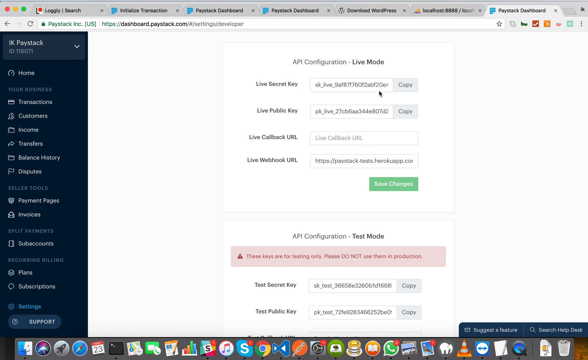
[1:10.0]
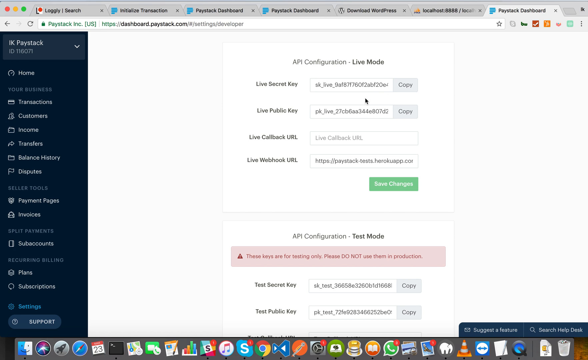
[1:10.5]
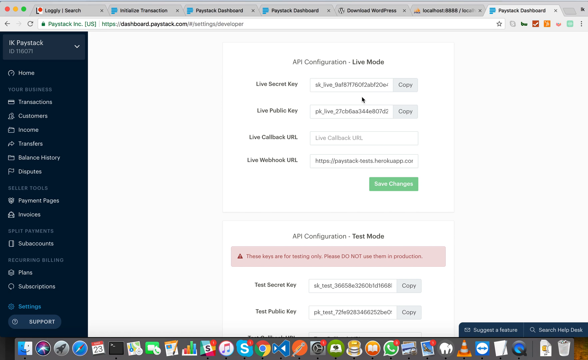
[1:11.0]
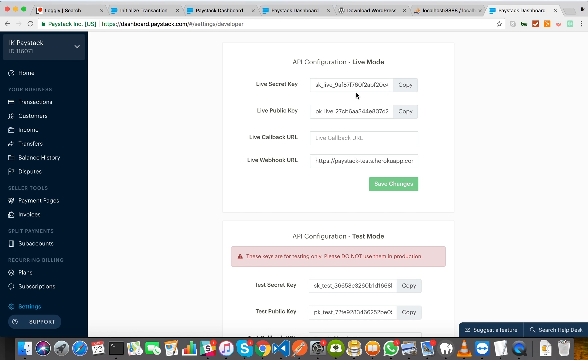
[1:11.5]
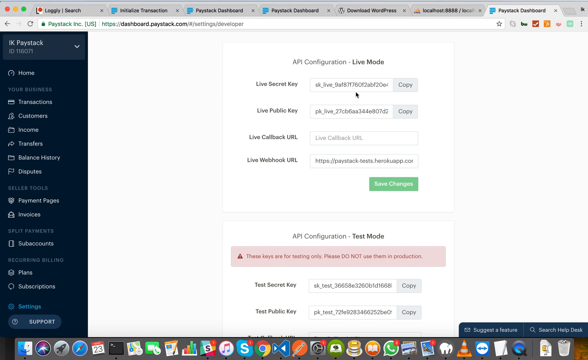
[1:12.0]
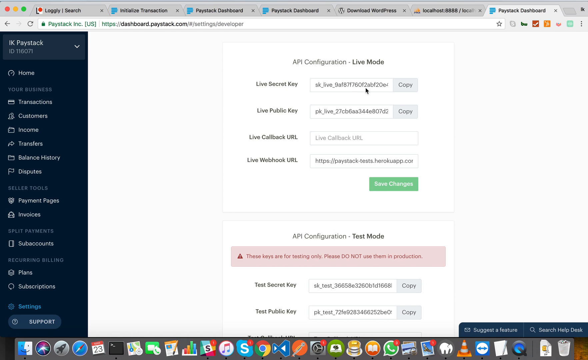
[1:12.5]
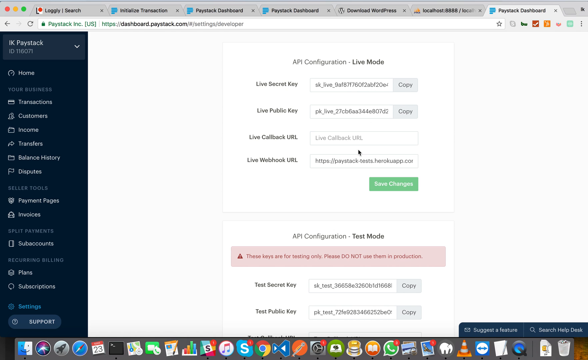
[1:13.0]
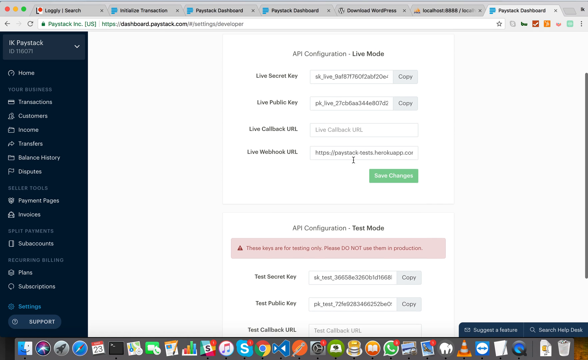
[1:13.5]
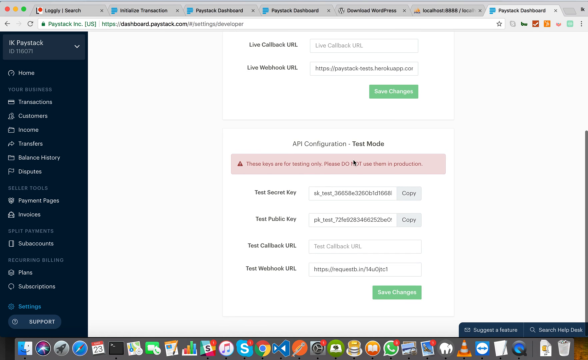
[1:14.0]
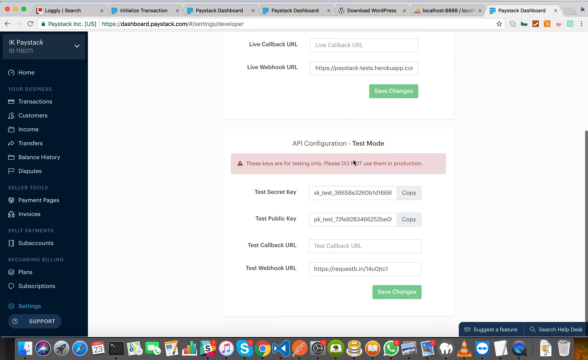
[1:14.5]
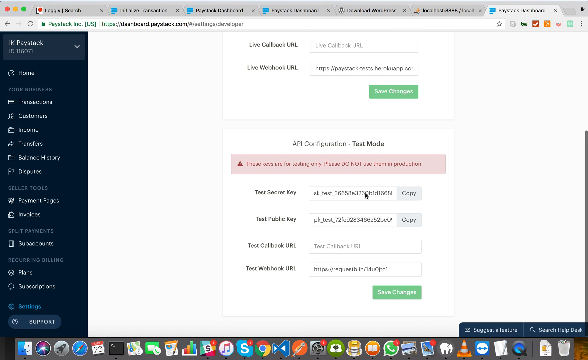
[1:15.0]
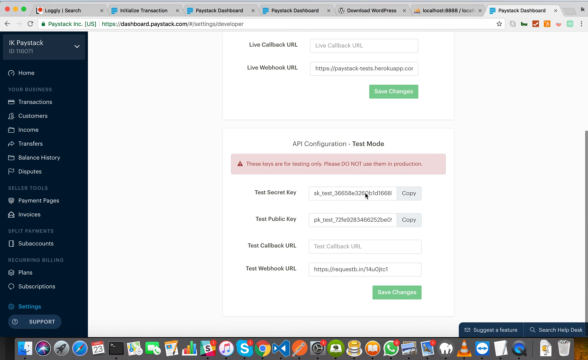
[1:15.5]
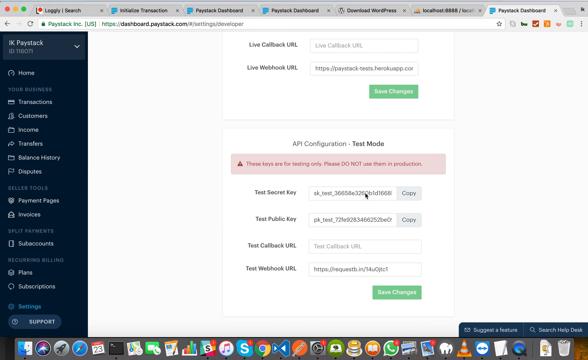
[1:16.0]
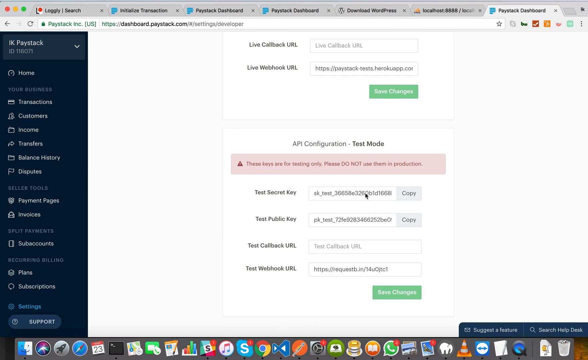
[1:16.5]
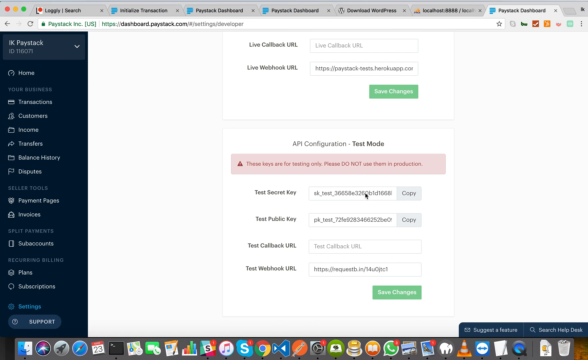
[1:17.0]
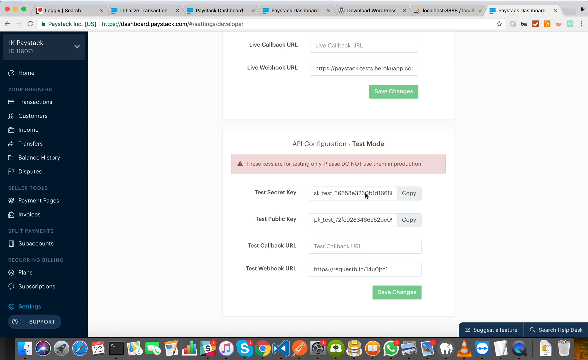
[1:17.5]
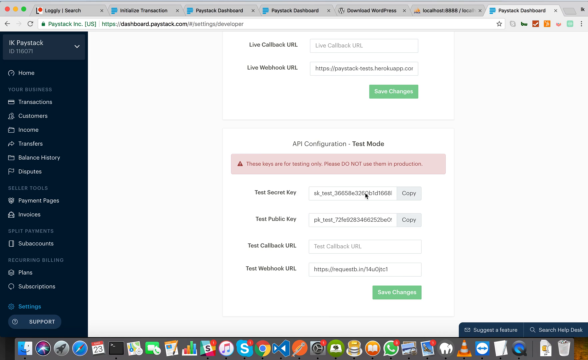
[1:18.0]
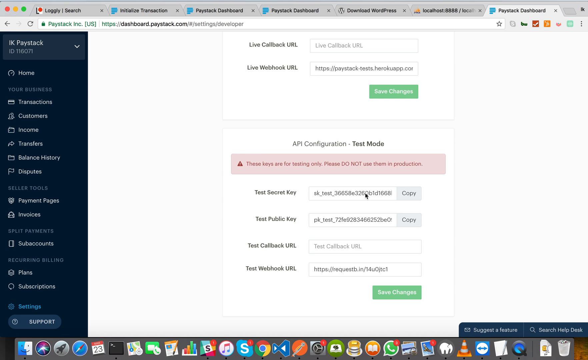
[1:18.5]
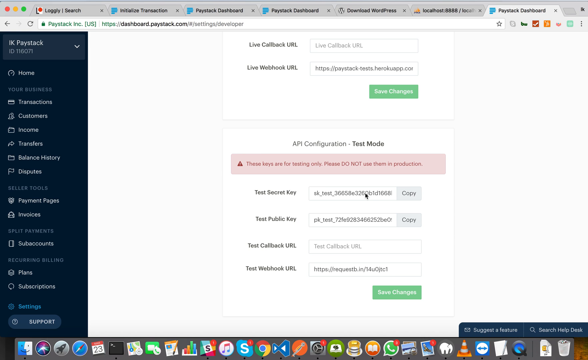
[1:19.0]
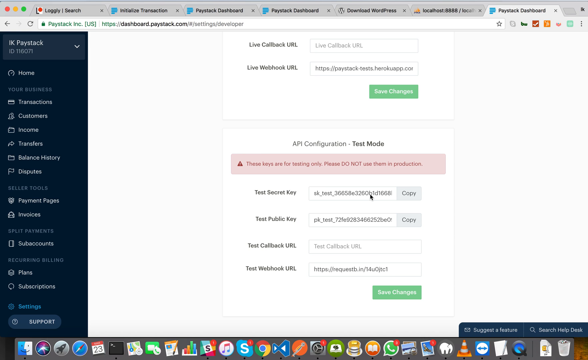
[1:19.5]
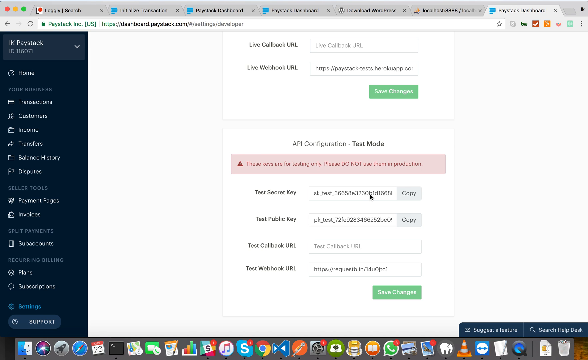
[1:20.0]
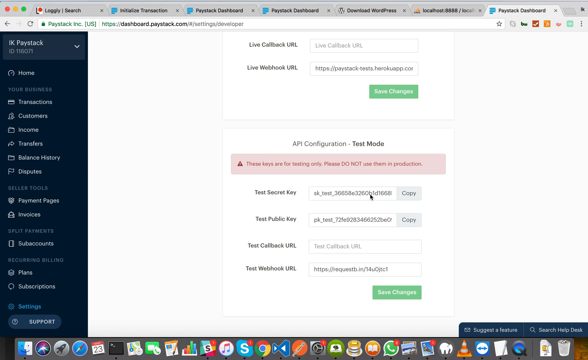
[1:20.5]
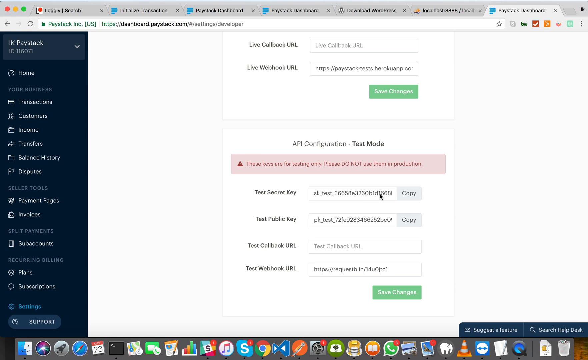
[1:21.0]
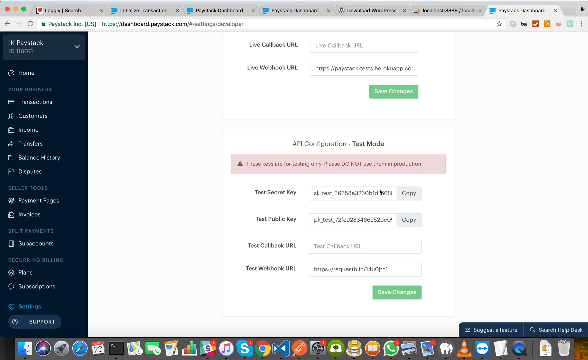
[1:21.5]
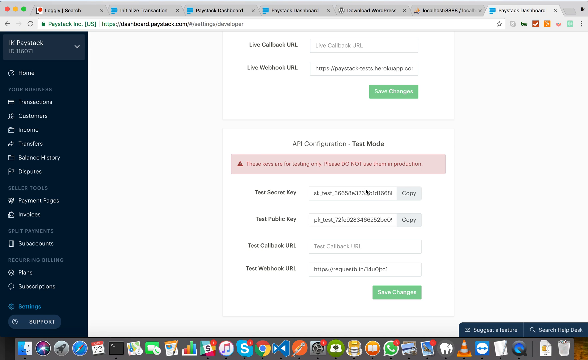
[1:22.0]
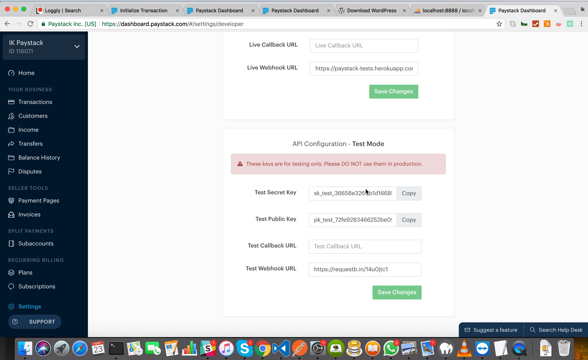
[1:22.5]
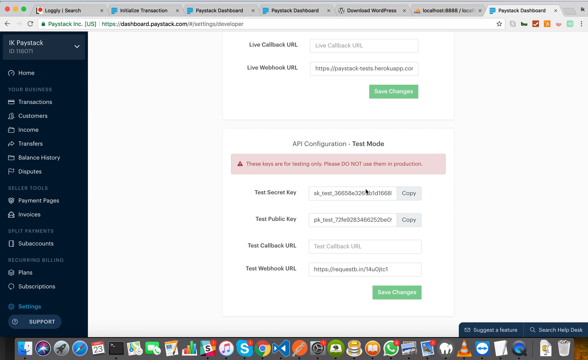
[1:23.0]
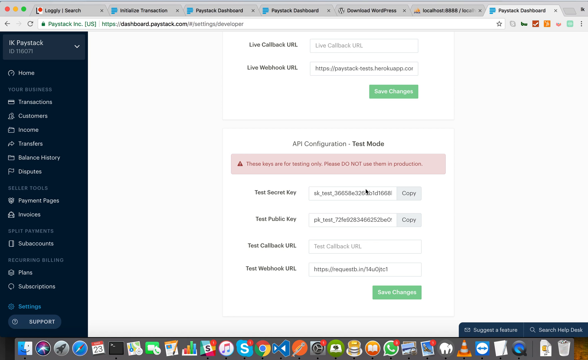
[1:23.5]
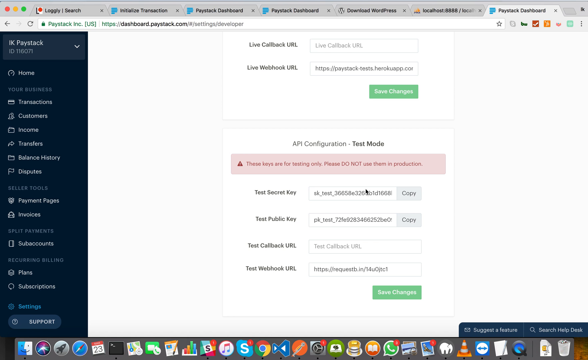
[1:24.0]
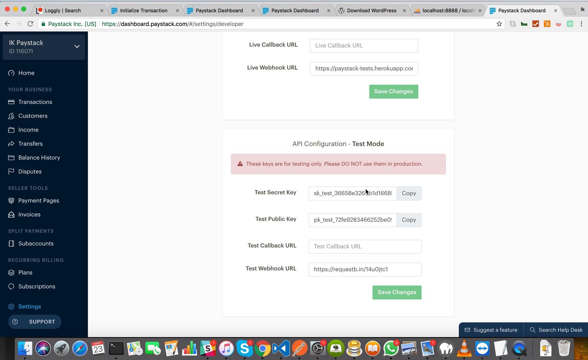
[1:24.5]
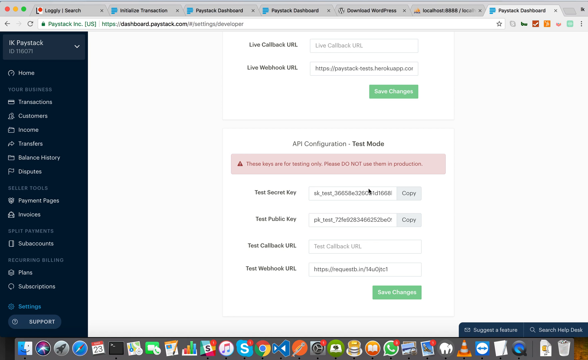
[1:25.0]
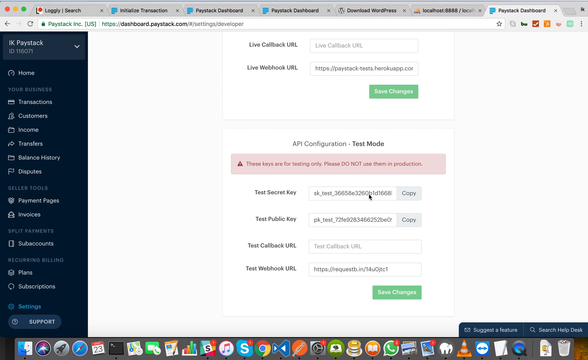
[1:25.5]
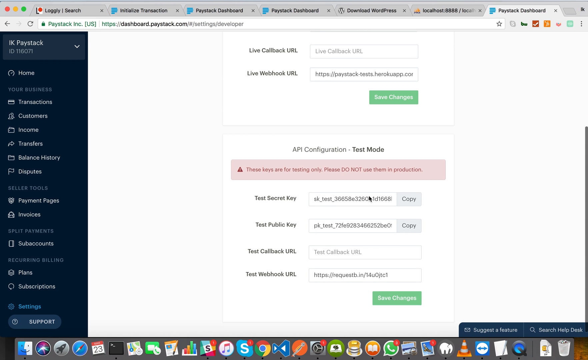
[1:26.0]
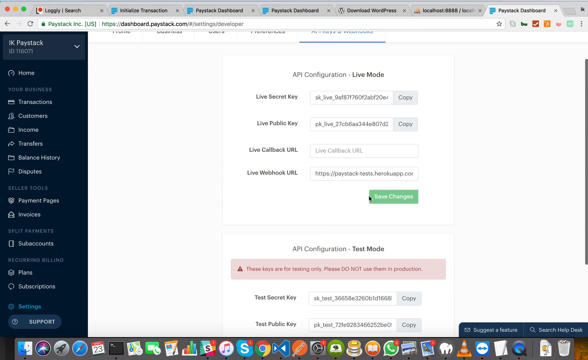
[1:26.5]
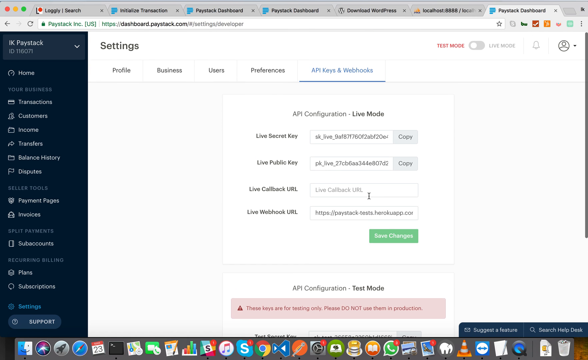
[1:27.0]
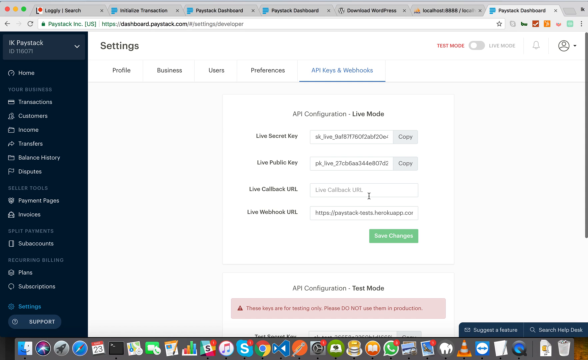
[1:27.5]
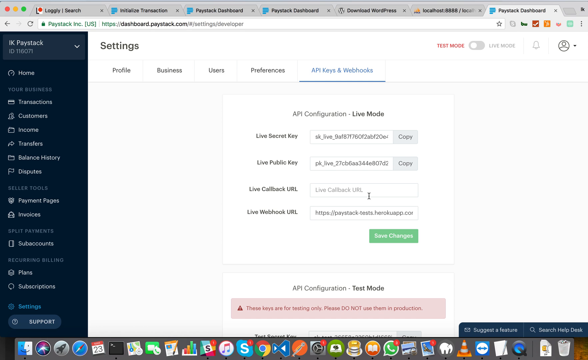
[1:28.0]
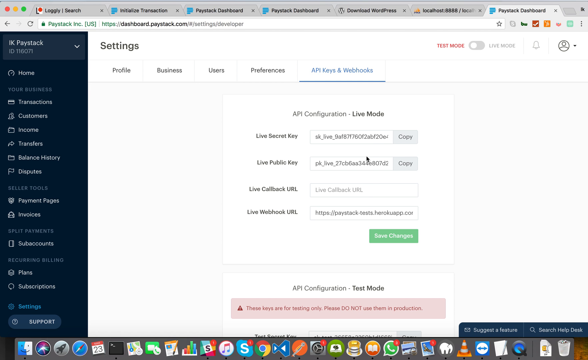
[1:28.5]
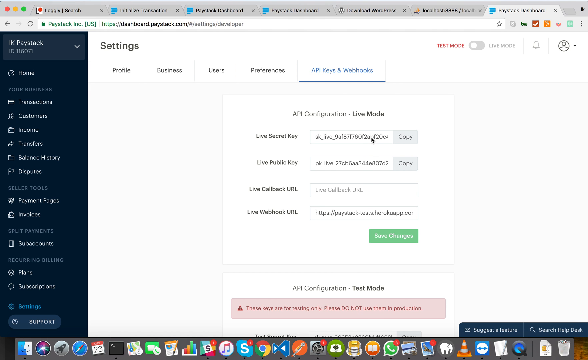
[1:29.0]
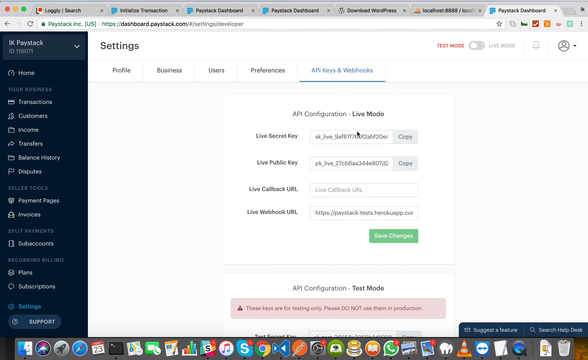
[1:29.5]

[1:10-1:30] API configuration live mode is at the top of the screen, listing live secret key, live public key, live callback URL, and live webhook URL. At the bottom of the page are the API configuration test mode categories, including test secret key and test public key, all on the IK Paystack dashboard. The mouse moves around the screen between the settings at the top and the test secret key at the bottom. It hovers over the red bar with the warning "these keys are for testing only, do not use in production." The numbers shown at the top and bottom are different.